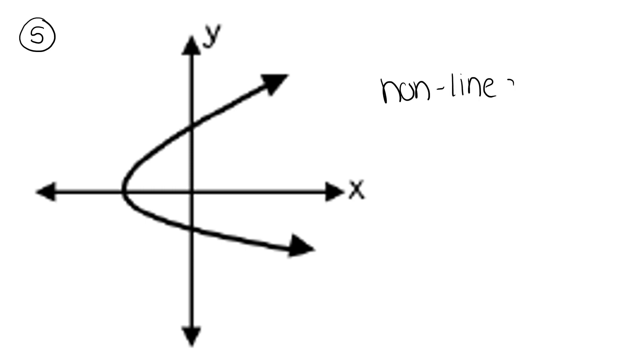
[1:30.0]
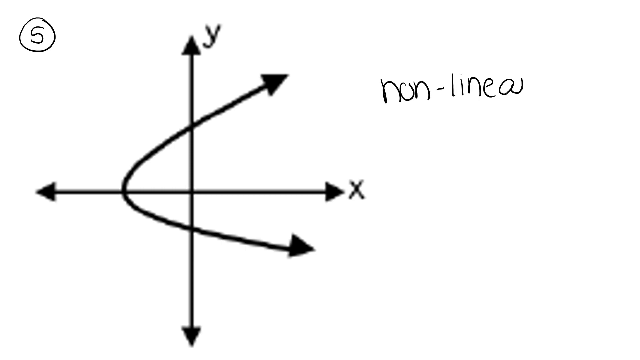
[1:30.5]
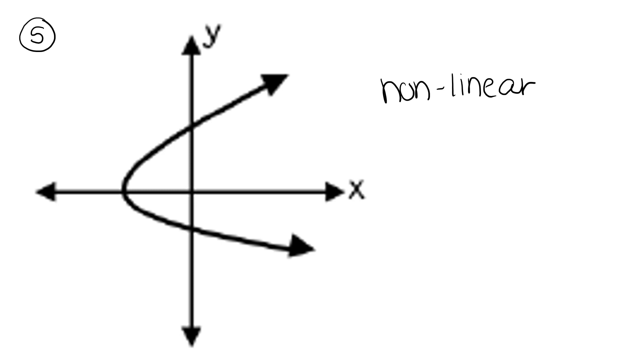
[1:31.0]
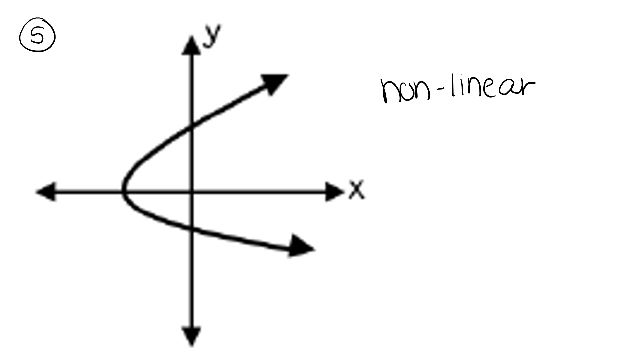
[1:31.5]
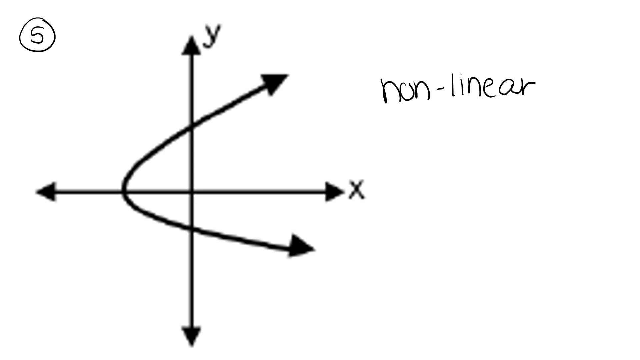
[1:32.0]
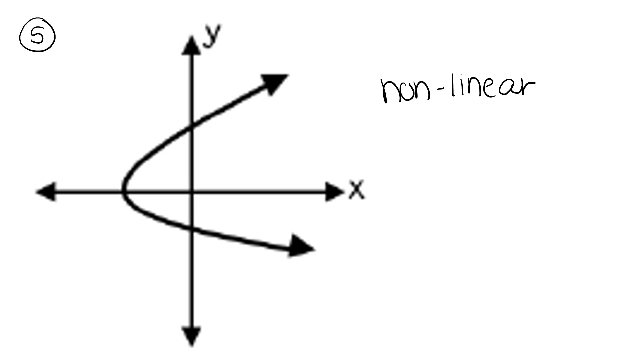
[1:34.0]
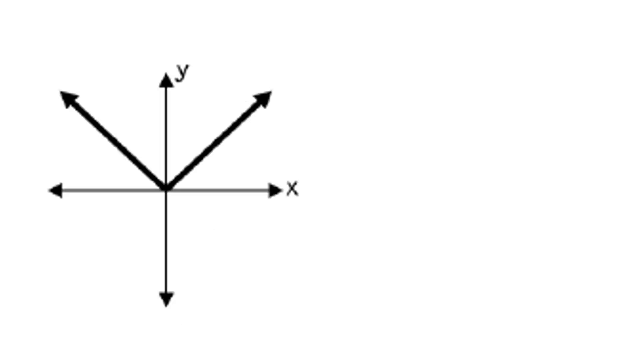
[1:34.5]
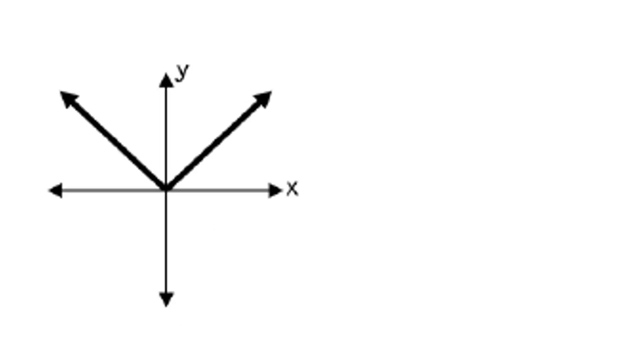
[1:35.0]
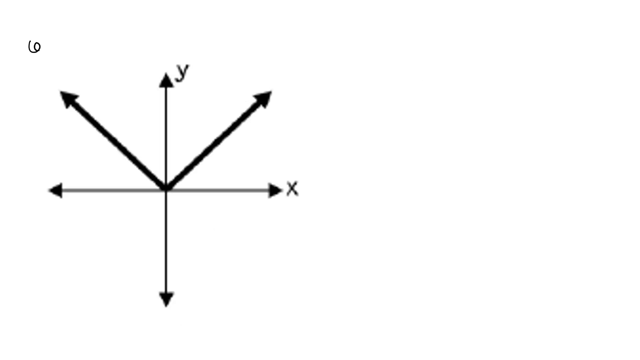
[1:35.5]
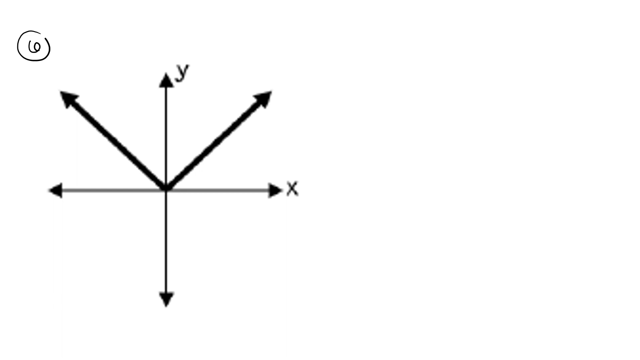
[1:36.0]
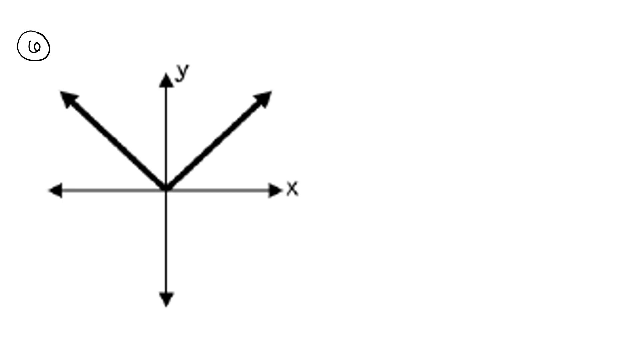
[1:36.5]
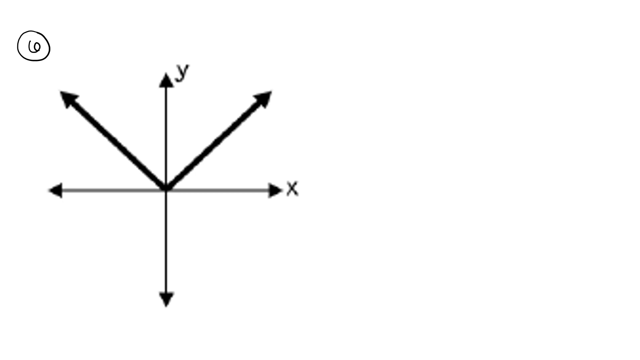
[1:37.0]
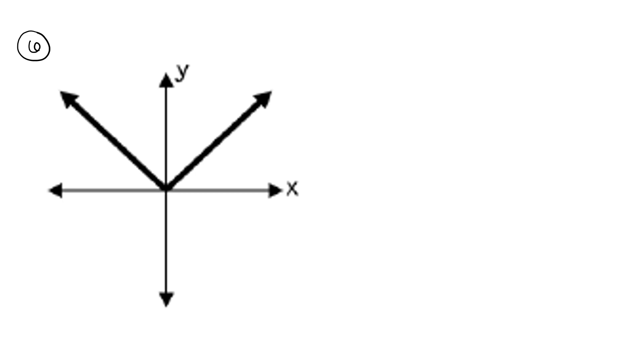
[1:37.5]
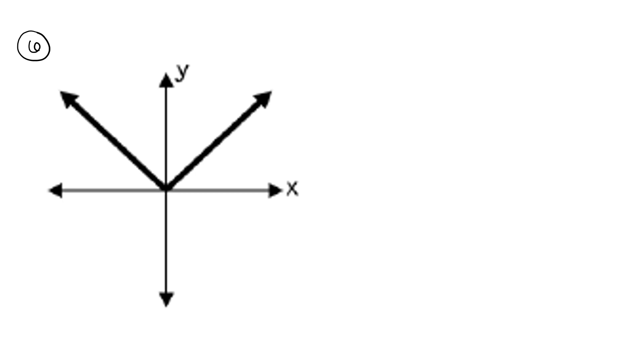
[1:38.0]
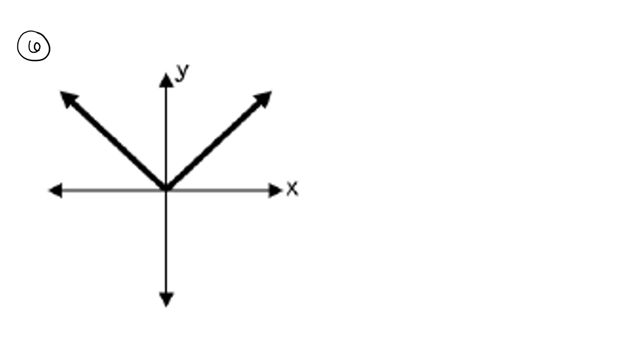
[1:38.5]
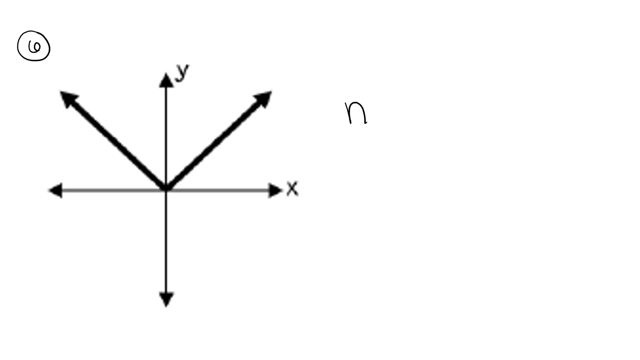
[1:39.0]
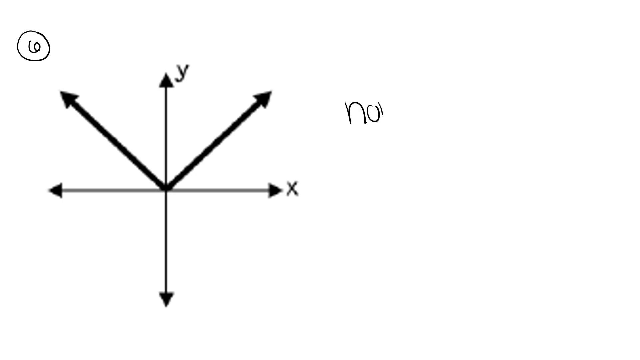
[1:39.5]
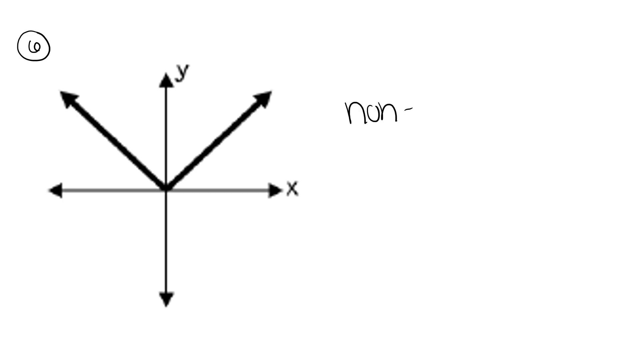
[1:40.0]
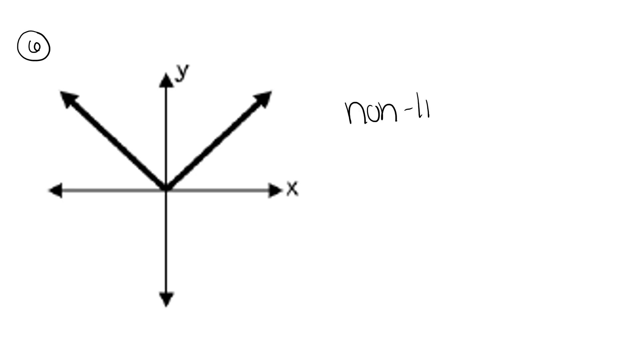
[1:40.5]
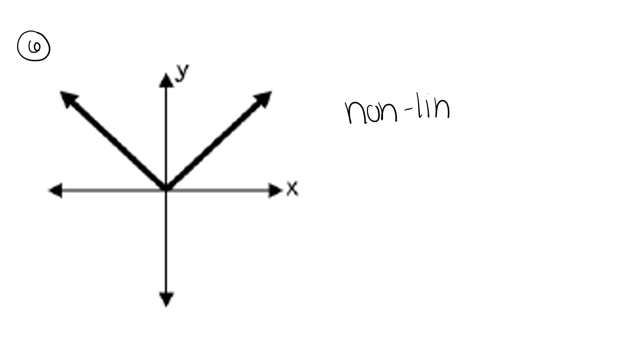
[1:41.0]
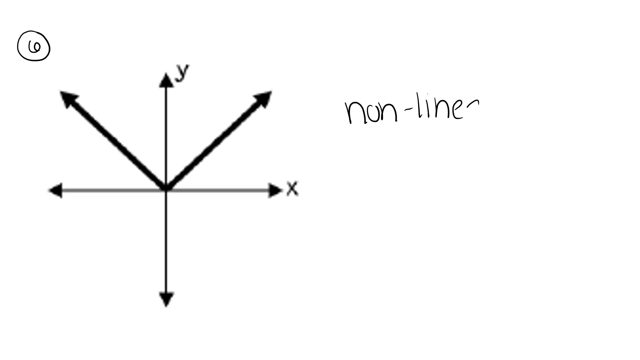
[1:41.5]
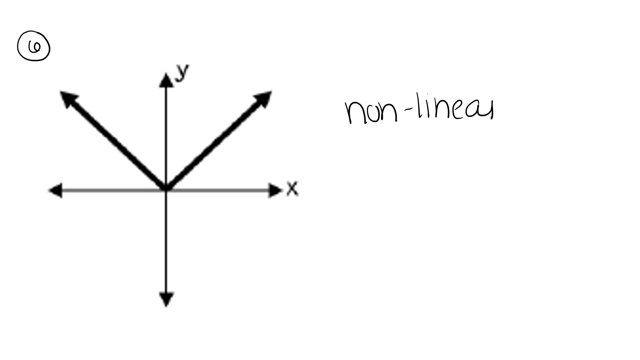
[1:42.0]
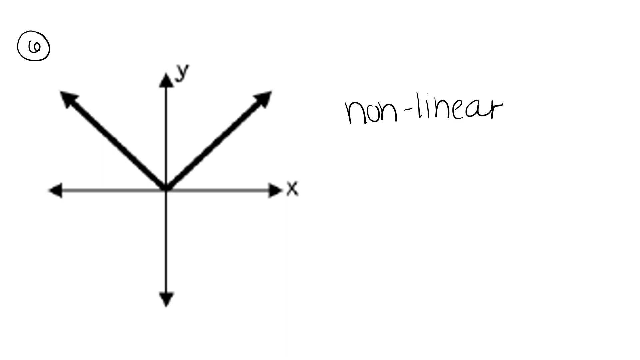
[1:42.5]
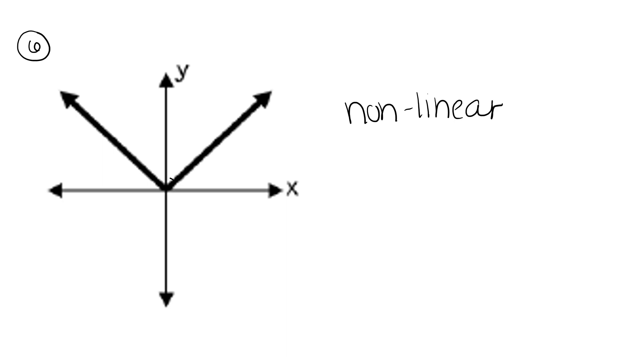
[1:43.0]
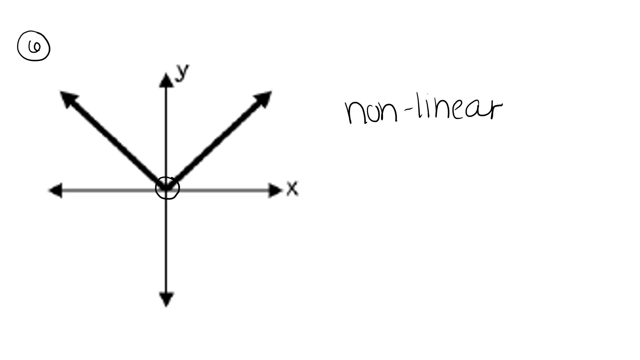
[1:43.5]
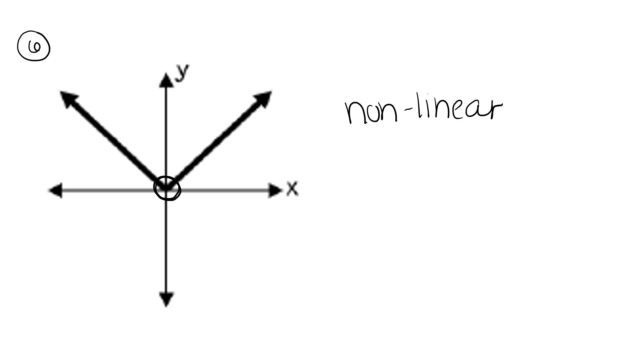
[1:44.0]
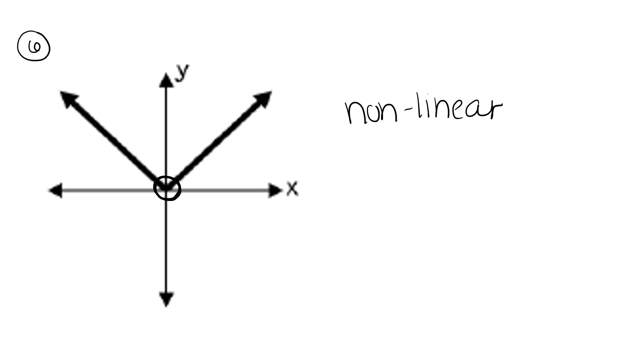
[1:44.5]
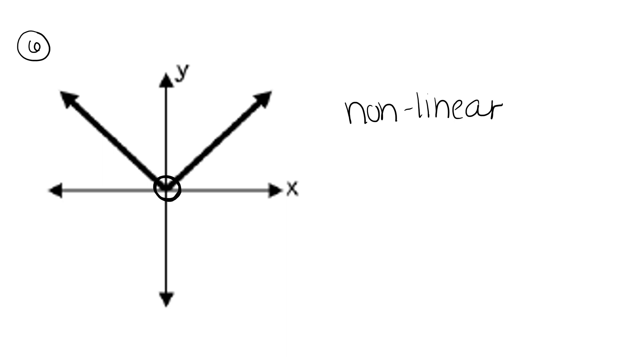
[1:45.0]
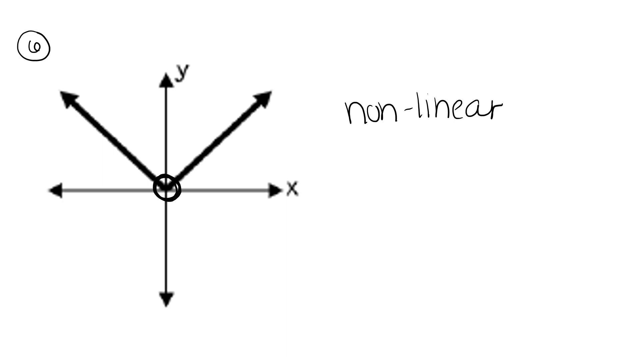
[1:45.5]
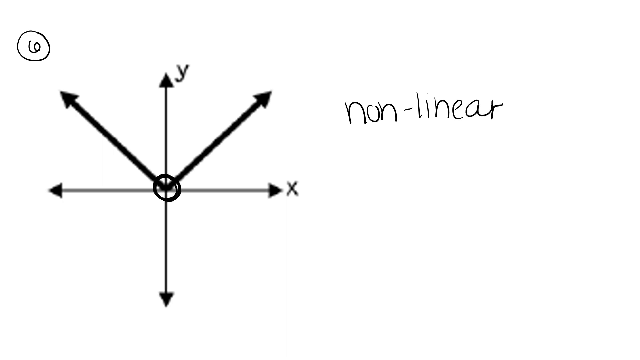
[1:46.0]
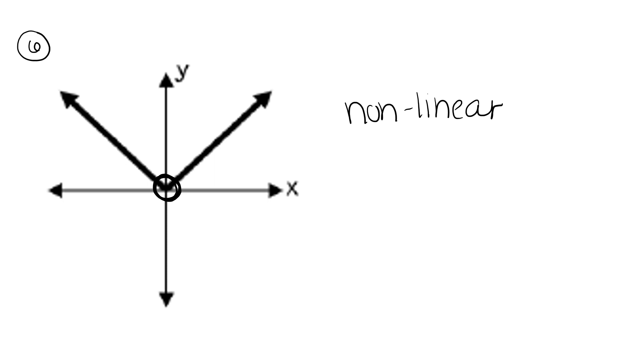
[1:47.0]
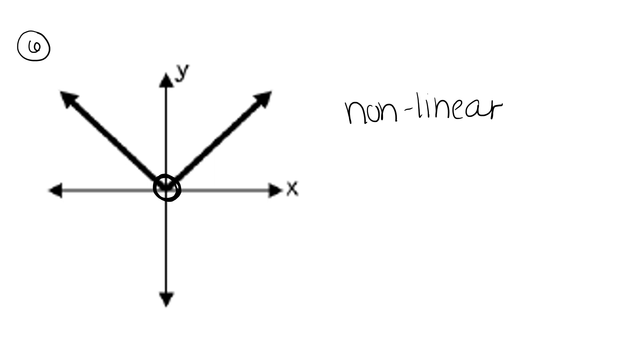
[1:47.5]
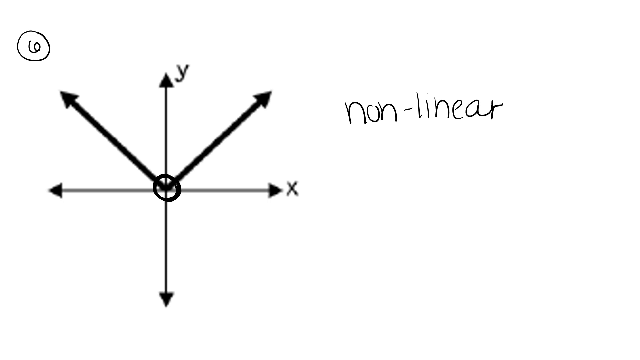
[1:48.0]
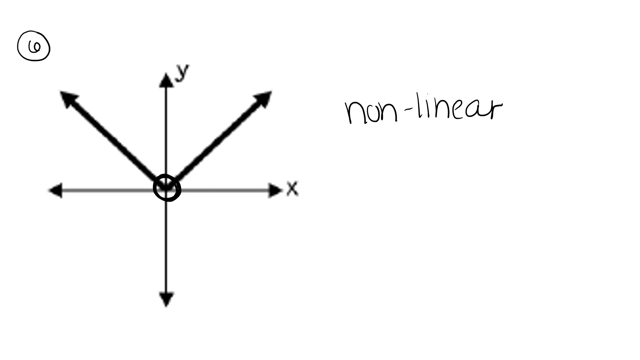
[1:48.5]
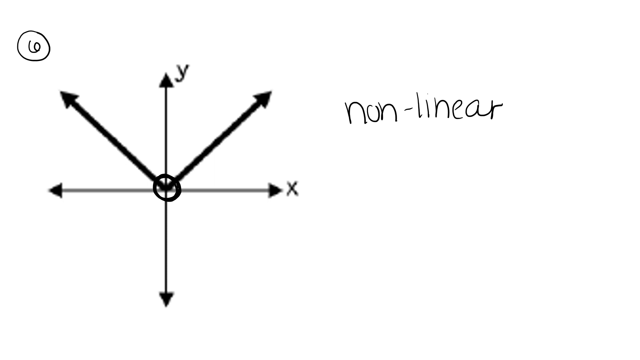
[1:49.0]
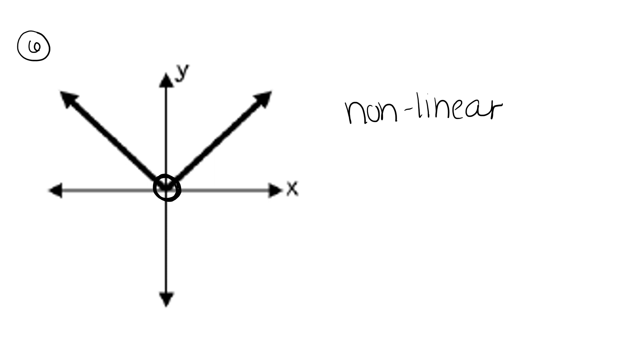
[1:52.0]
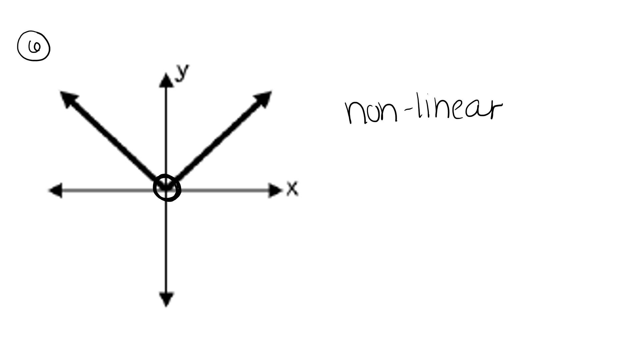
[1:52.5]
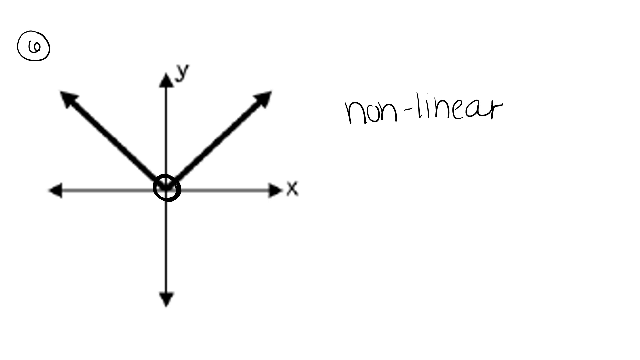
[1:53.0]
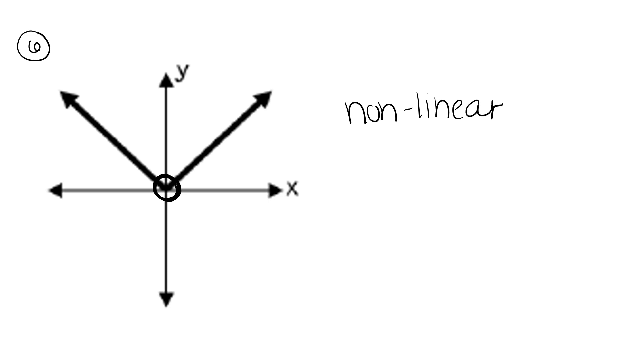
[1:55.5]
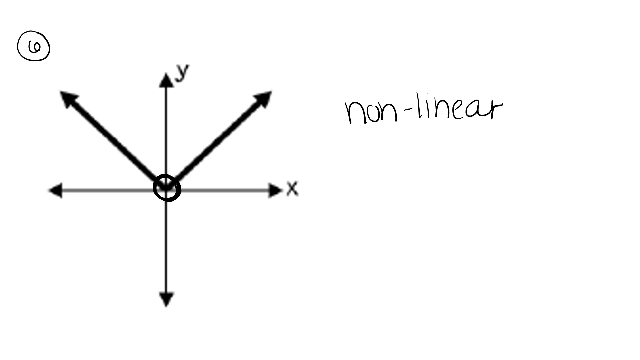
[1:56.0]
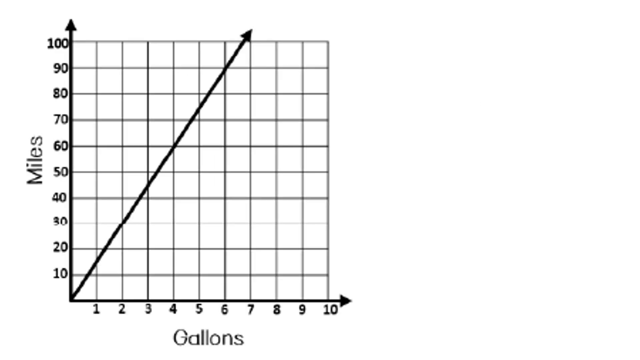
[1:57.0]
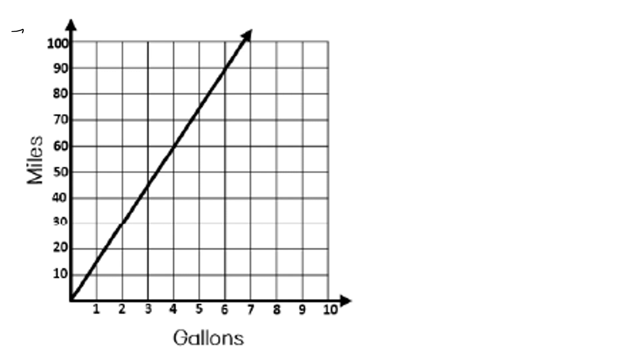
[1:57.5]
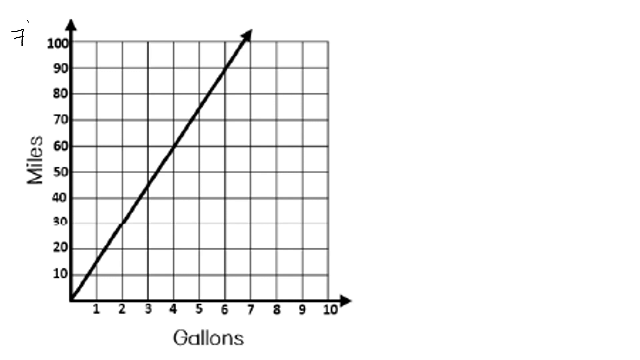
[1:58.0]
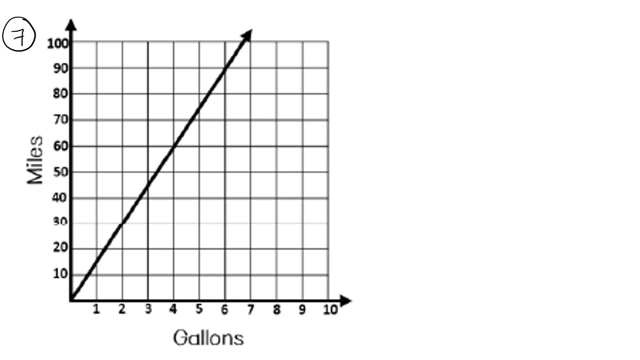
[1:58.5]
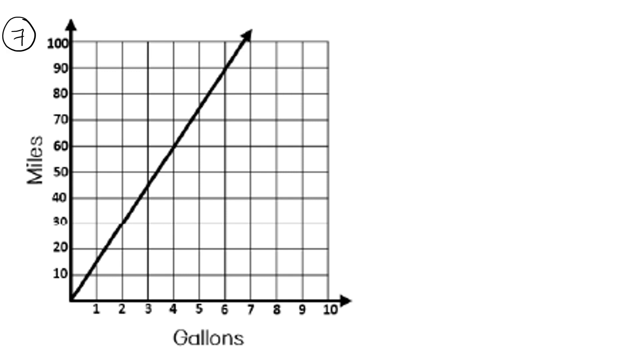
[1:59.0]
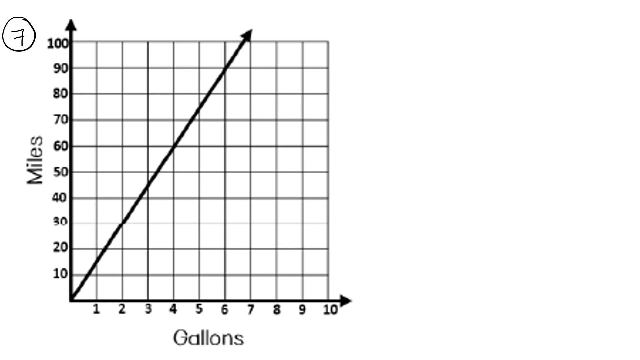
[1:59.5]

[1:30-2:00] The number 5 is written at the top left above a graph with a y-axis and an x-axis. A curve touches the y-axis line, then the x-axis line, then the y-axis line again. The word "nonlinear" is written at the top right. Next, another graph is drawn on y and x axes, numbered six: one line is drawn on the right, positive side and another on the negative side, forming a V-shape that originates from zero. The point at zero is circled, and this graph is also labeled nonlinear.